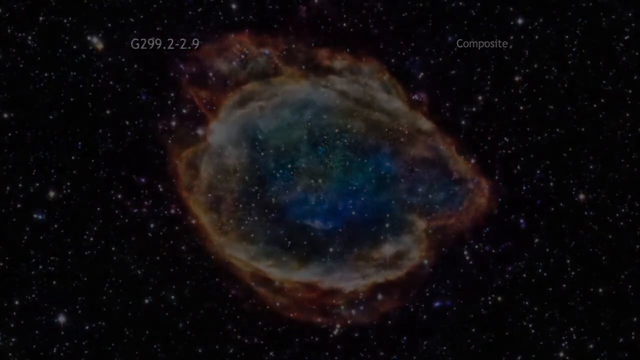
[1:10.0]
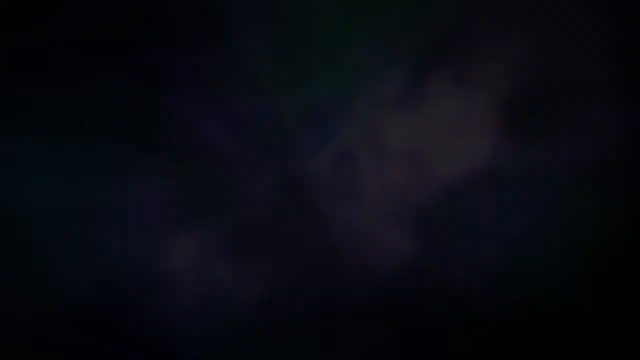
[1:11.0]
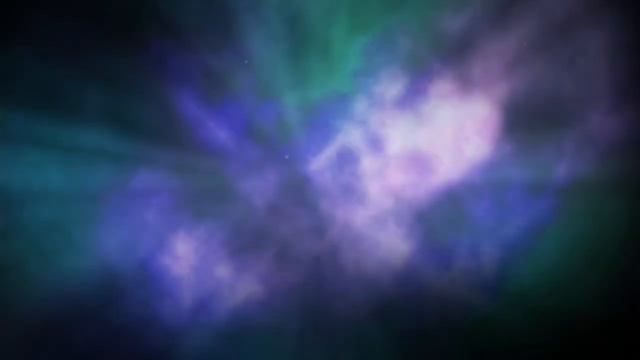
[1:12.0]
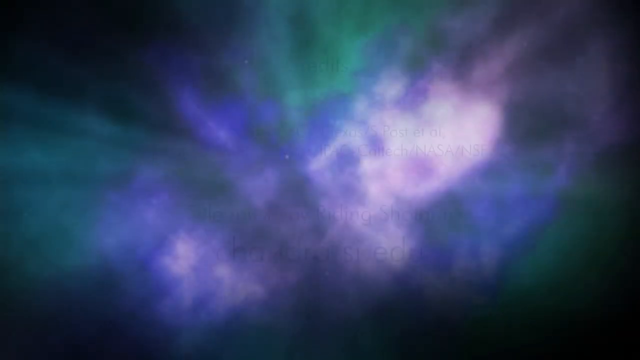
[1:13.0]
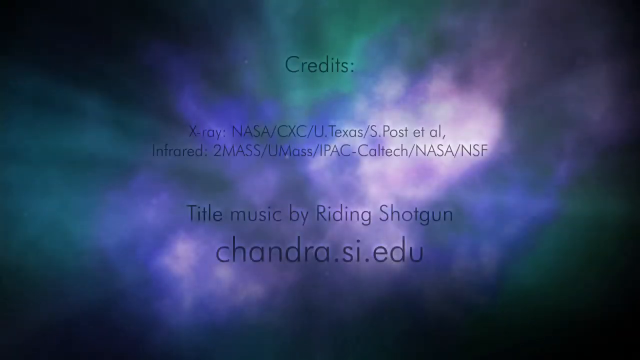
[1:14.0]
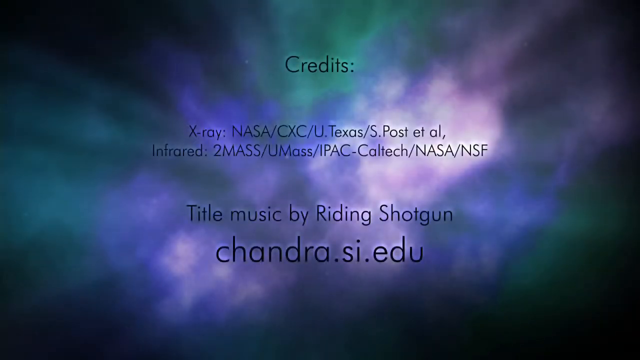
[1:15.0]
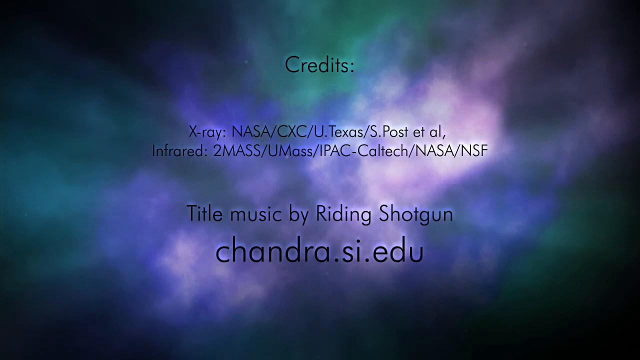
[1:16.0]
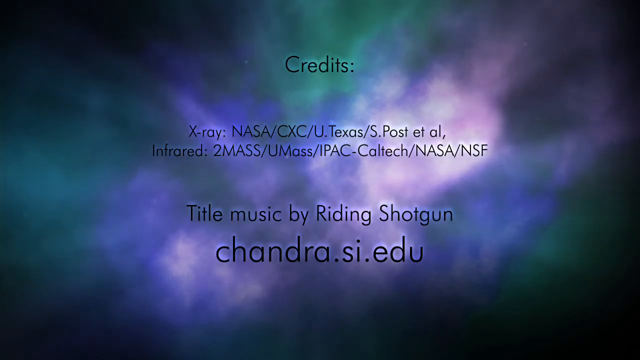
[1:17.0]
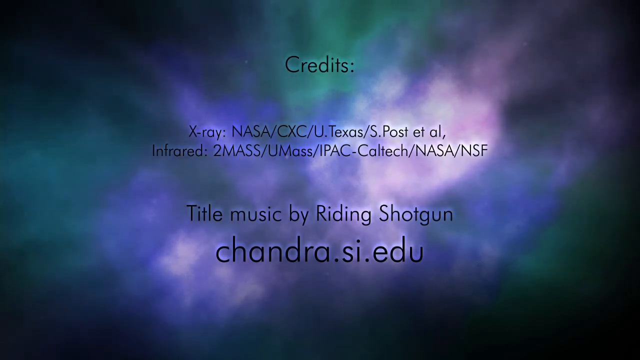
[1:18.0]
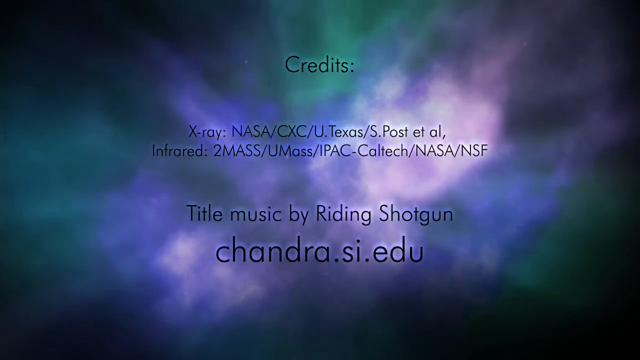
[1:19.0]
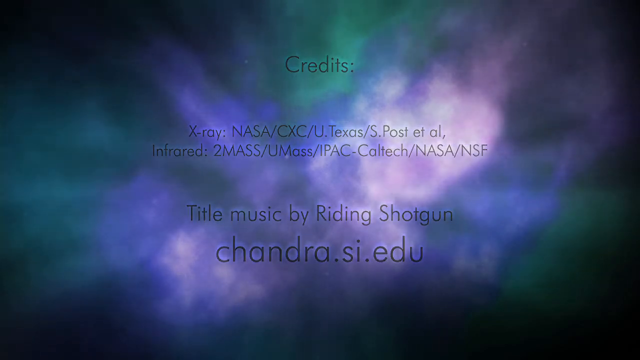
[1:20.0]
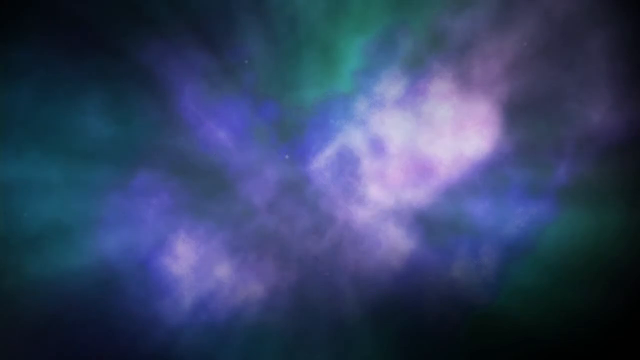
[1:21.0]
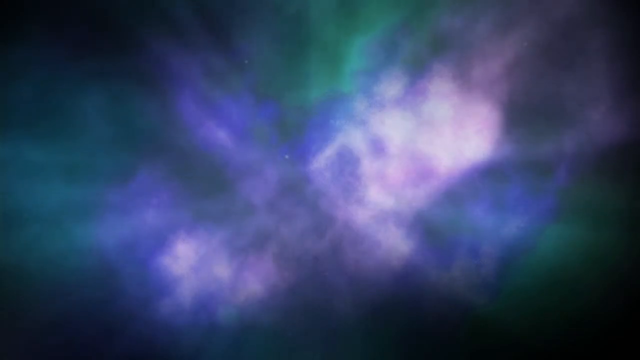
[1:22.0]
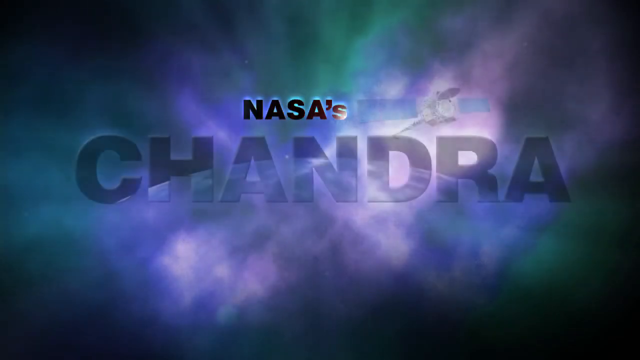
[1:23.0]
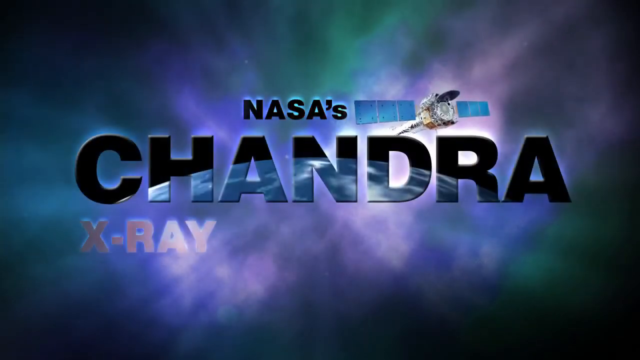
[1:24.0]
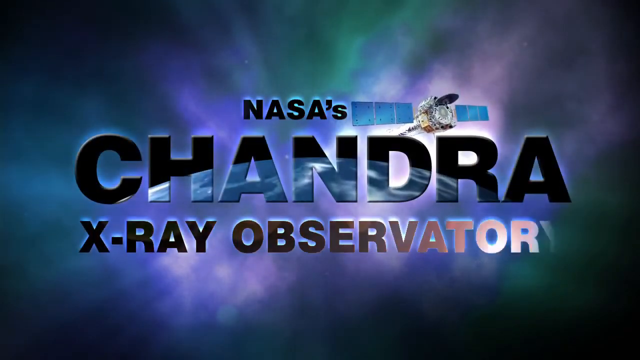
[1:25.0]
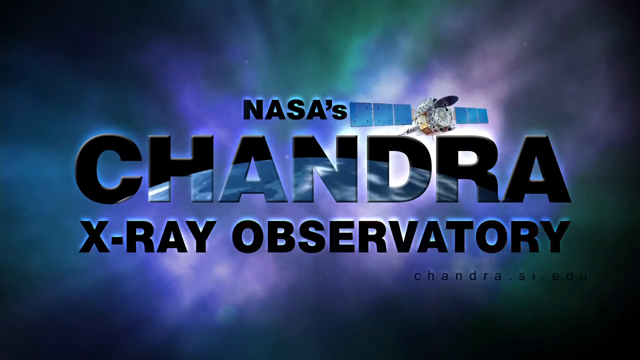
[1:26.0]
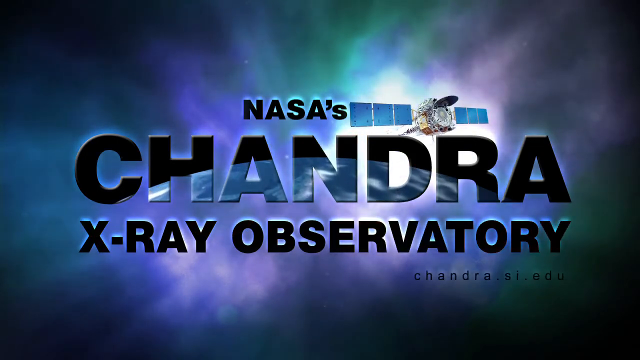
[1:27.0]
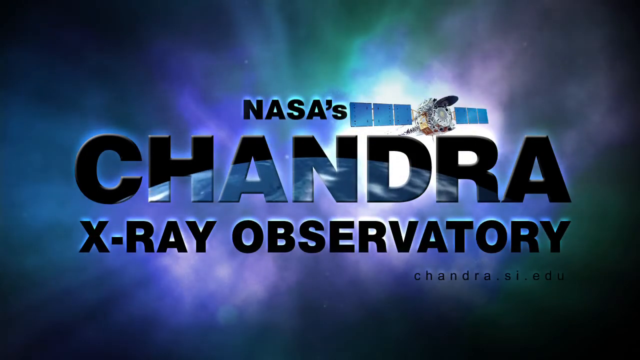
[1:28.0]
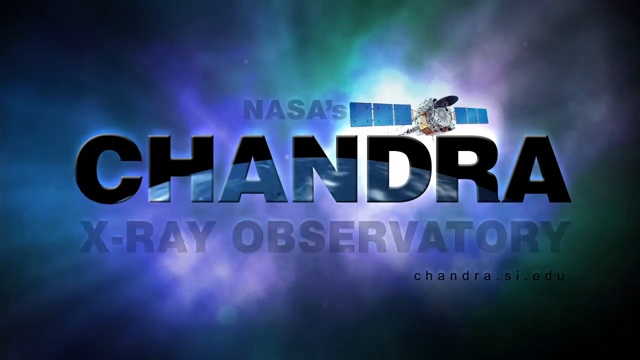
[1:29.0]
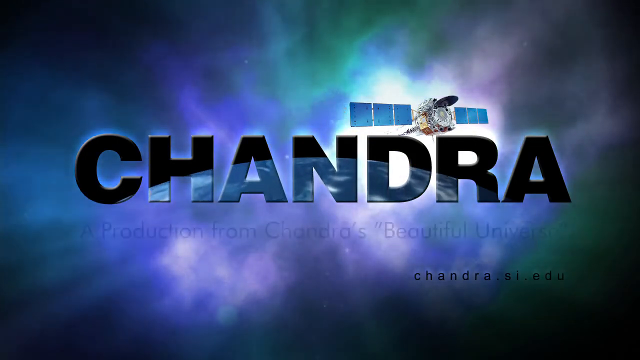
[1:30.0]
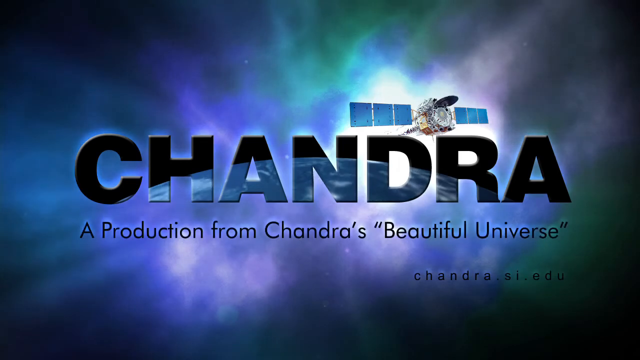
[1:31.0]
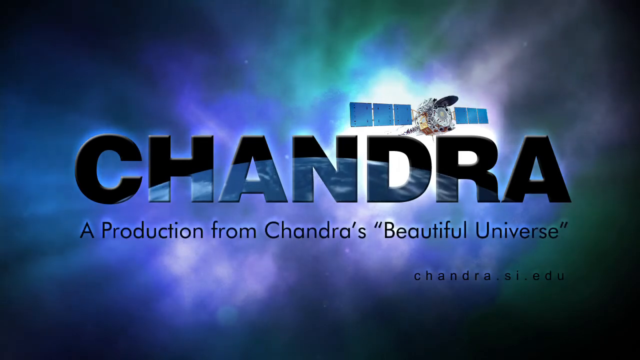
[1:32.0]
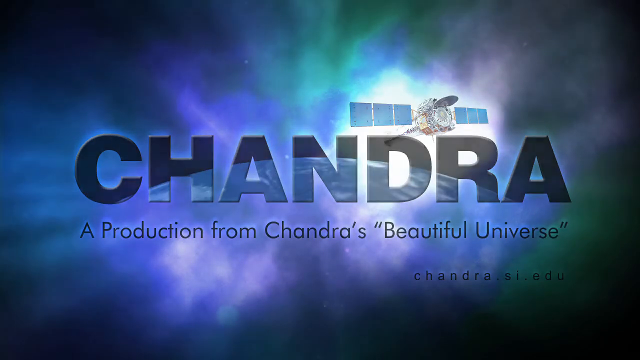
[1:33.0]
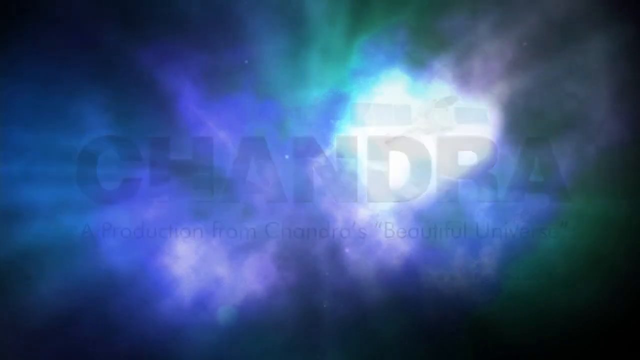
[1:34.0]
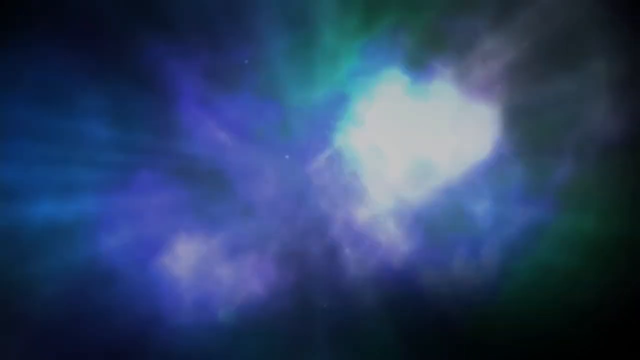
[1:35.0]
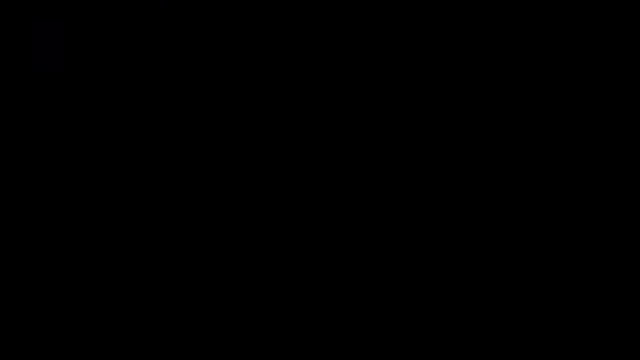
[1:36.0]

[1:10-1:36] A black sky is filled with stars of all different sizes and brightnesses; most are white, but some appear blue. A cloud-like area in the center goes from blue-green to white-yellow to red. Stars can be seen through this area, except for the yellow part, through which fewer stars can be seen. Text in the upper left reads "G299.2-2.9" and in the upper right "composite". This fades out to a black screen, and then a screen appears with bright white near the center and blue and green coming off of it on a black background, with a few white speckles through the blue in the upper portion. Black text appears over this, listing credits: "x-ray NASA/CXC/U Texas/S Post et al.", below that "infrared 2MASS/UMass/IPAC-Caltech/NASA/NSF", with a slash between each facility, below that "title music by Writing Shotgun", and at the bottom "chandra.si.edu". The text disappears and the colors start turning clockwise very slowly. On top of them, "NASA's" appears at the very top, with a satellite next to it that has a cylinder-shaped center and three blue squares on either side. Below that is "Chandra" in black, with a planet shape arcing through it from the bottom of the C to the bottom of the R, and below that "x-ray observatory". The text under "Chandra" disappears and new text reads "a production from Chandra's beautiful universe".